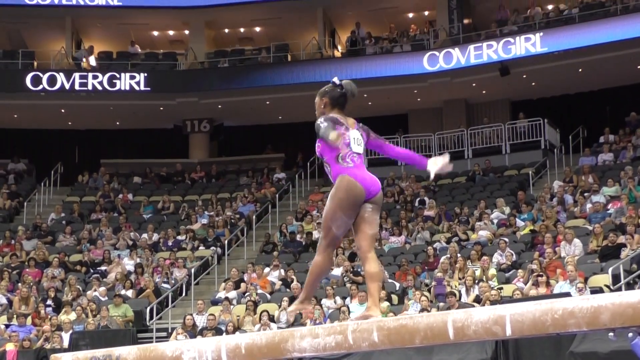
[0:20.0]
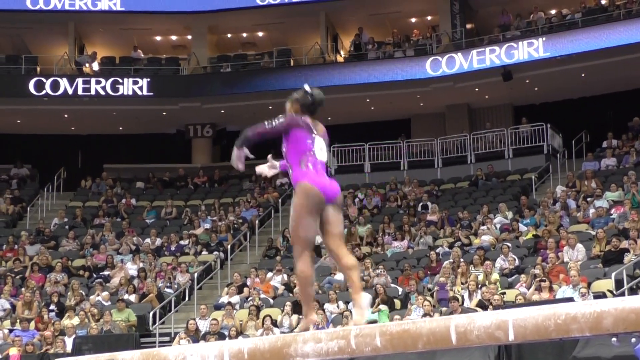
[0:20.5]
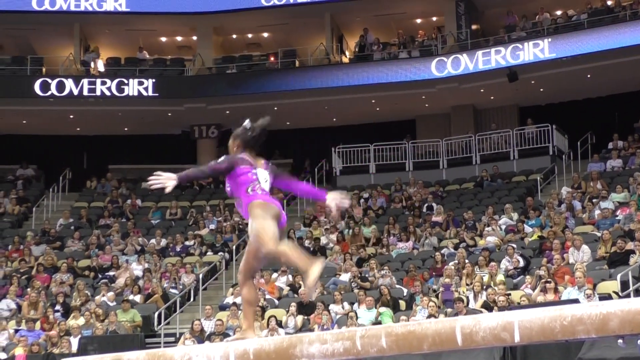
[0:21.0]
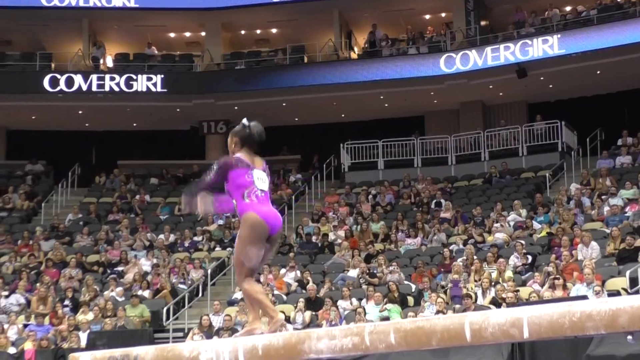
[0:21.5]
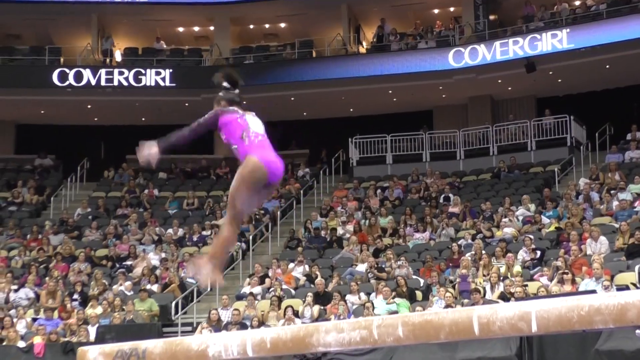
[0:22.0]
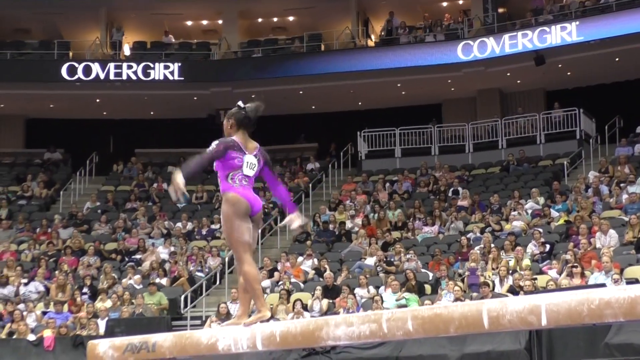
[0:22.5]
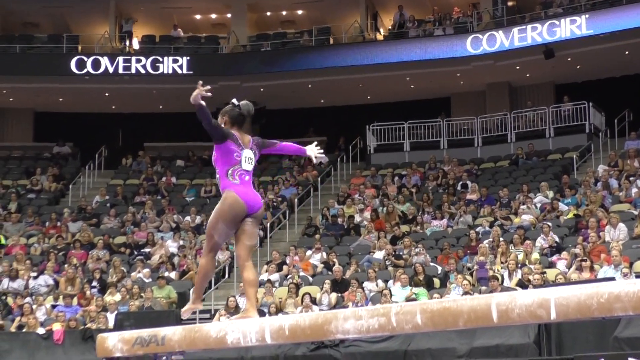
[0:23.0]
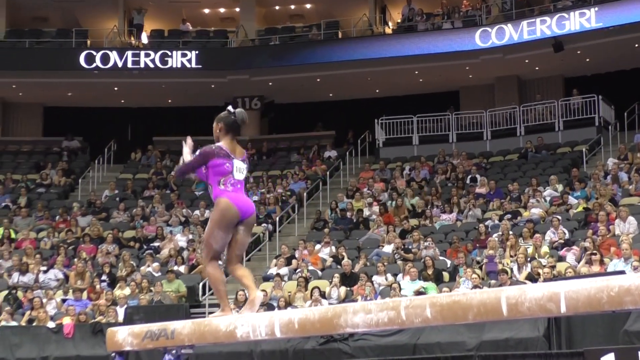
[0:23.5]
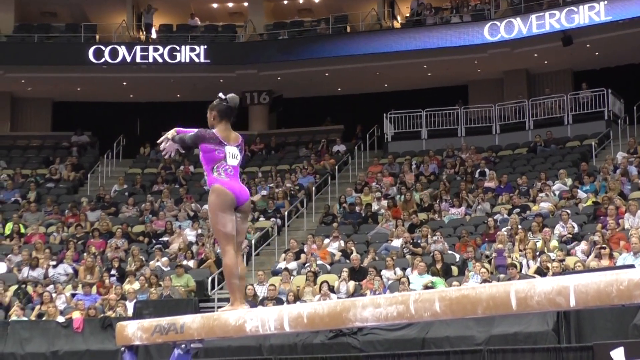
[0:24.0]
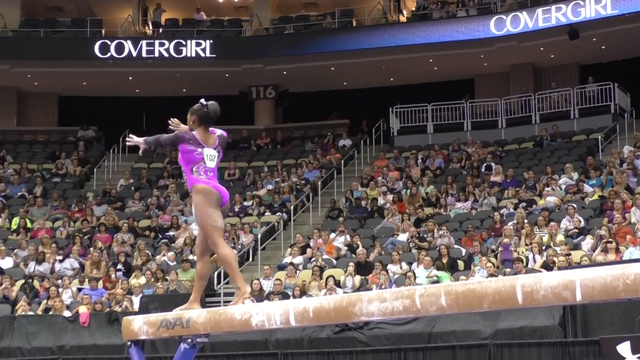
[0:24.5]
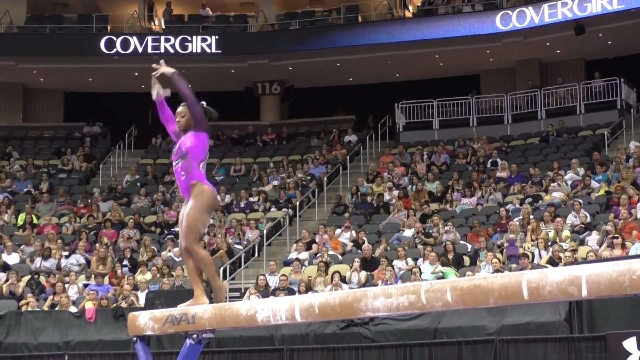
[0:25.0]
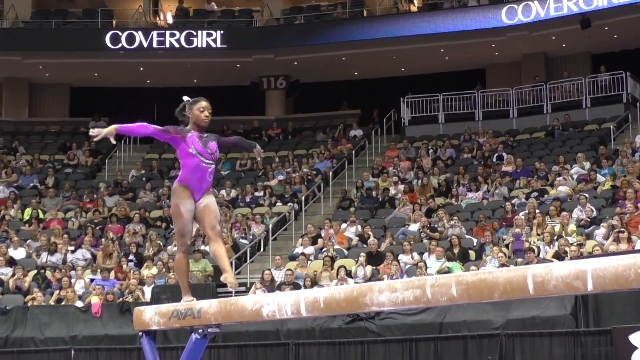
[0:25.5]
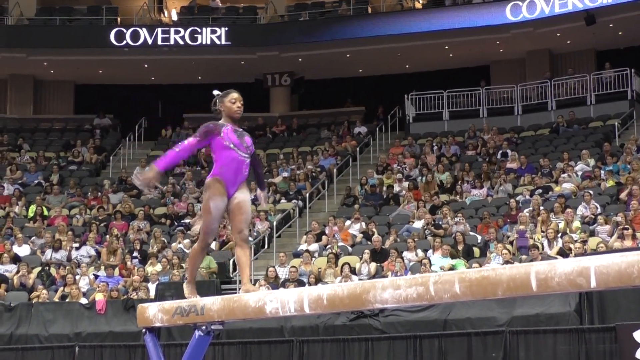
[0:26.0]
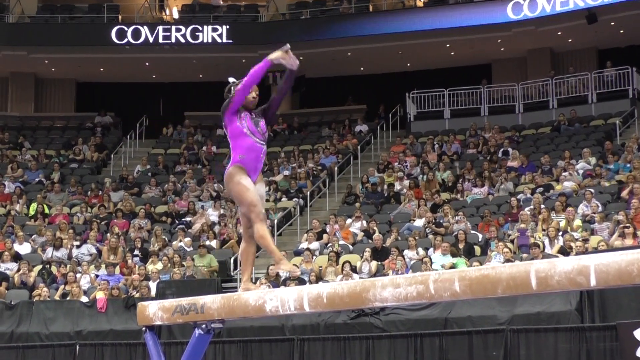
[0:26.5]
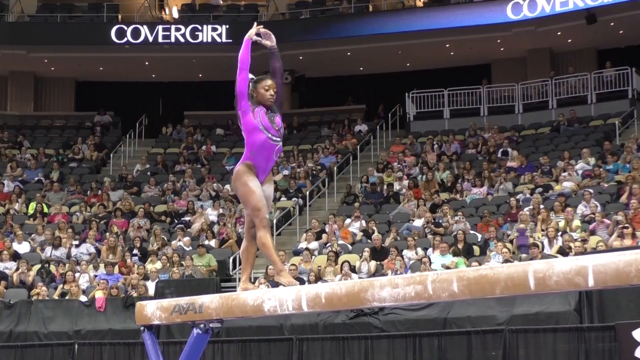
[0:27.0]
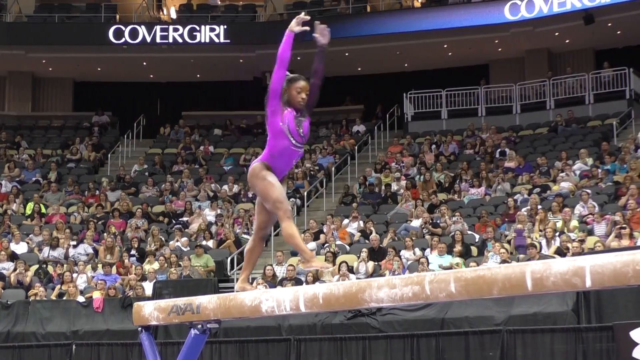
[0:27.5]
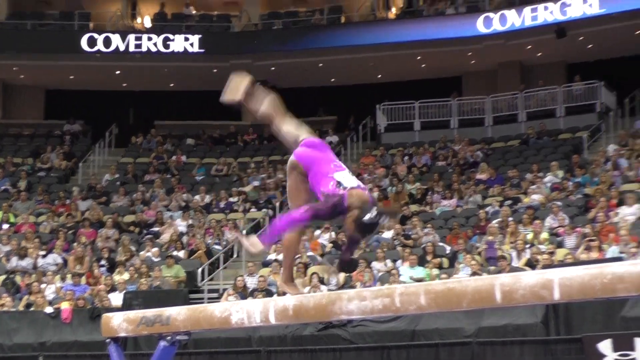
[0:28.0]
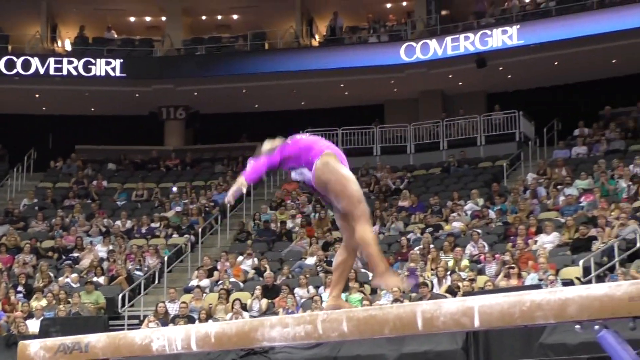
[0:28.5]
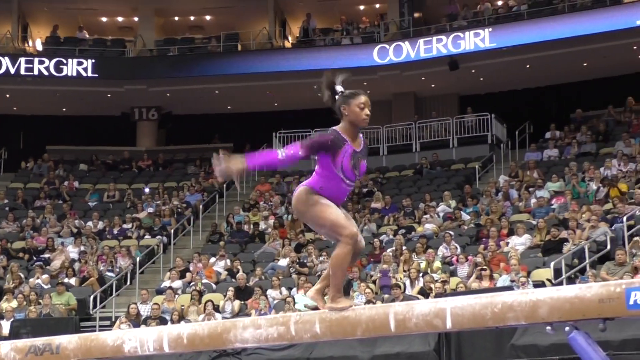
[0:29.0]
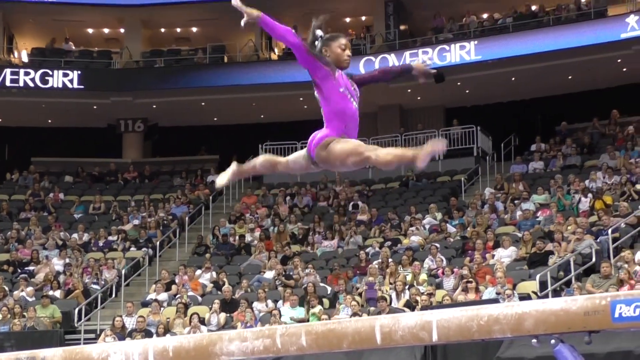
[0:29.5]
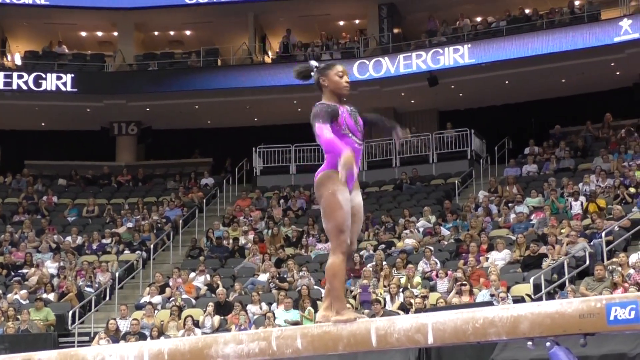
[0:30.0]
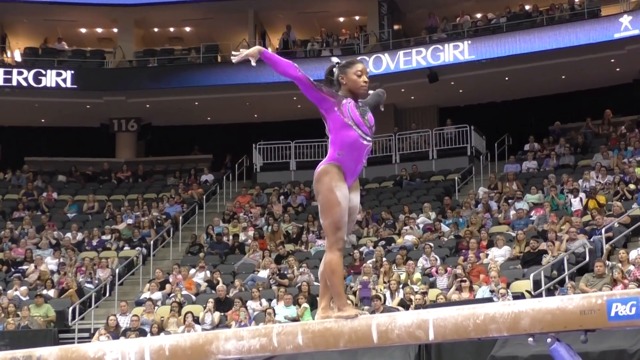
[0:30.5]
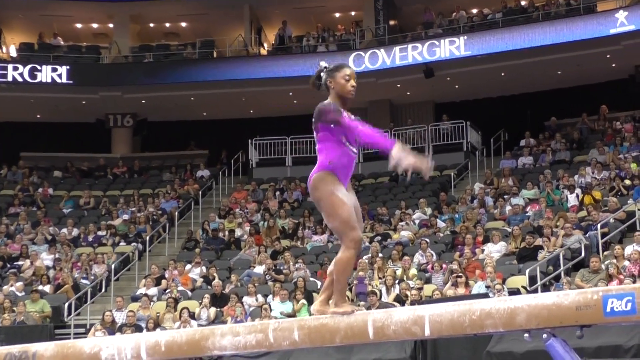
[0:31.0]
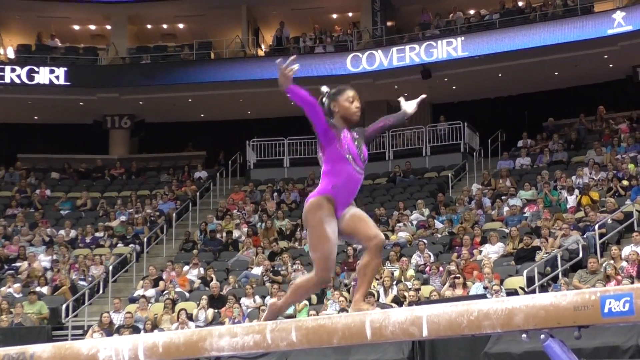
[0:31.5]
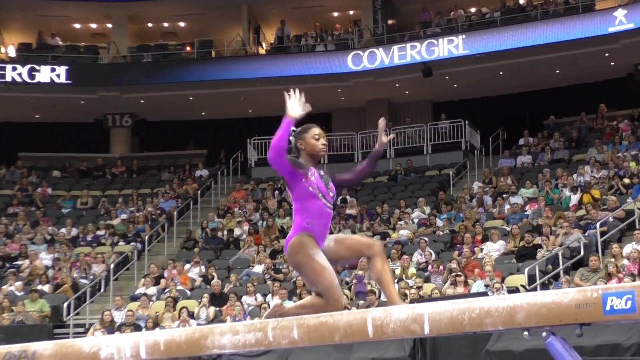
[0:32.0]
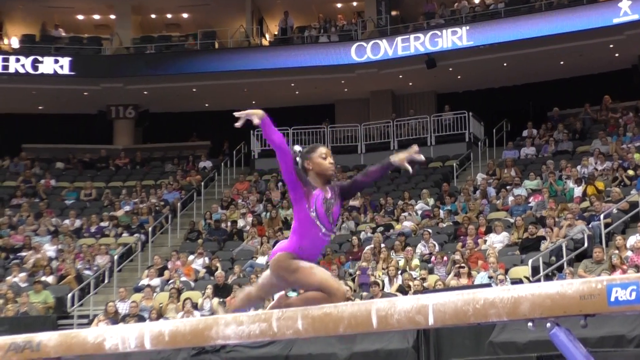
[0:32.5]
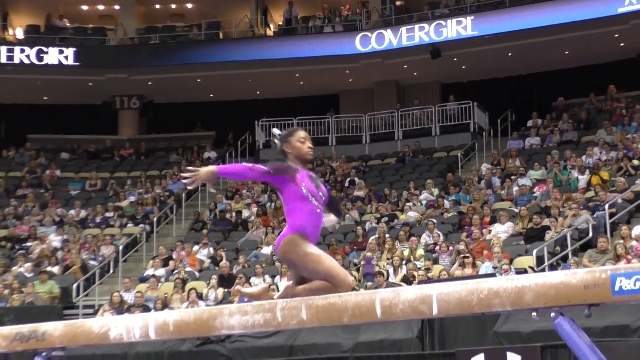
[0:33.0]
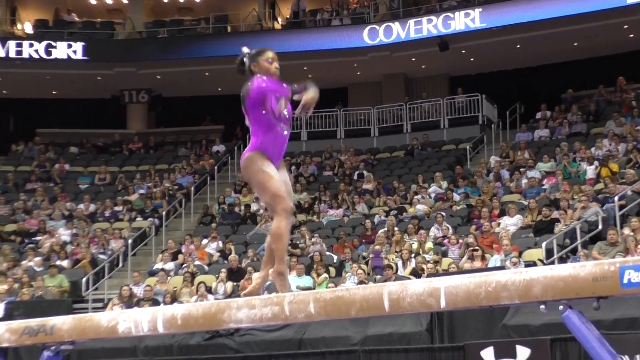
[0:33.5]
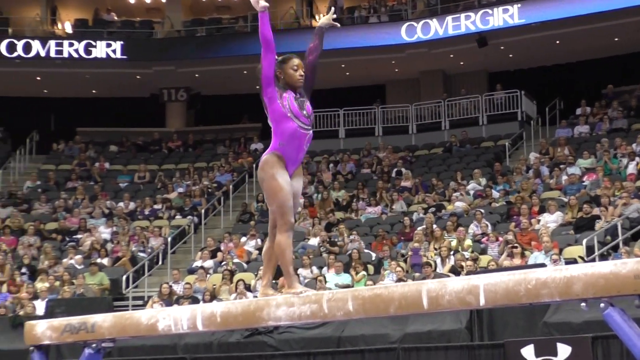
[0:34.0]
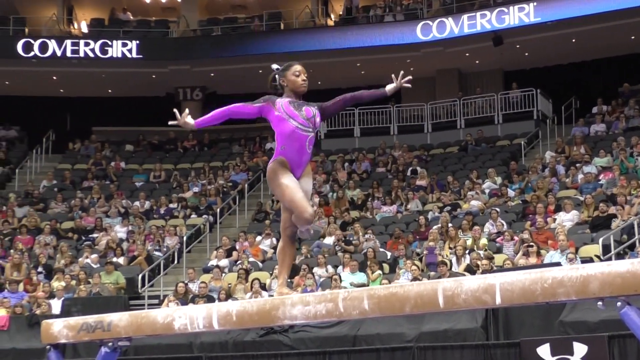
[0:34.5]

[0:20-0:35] After this moment of preparation, she jumps into a split leap and then a tuck in which her feet go right out in front of her and her upper body almost moves flat to her feet. She takes a few steps, moving her hands with them, sets up for a front flip without using her hands on the bar, and jumps up into splits again. She goes down into a kneeling position and then back into a stand with her arms up. On the second balcony of the venue, "Covergirl" is written a couple of times in kind of lit-up letters, as sponsorship of the event. Simone Biles wears a purple leotard with black on the arms and a silvery, glittery design along the chest, and her hair is in a short ponytail.